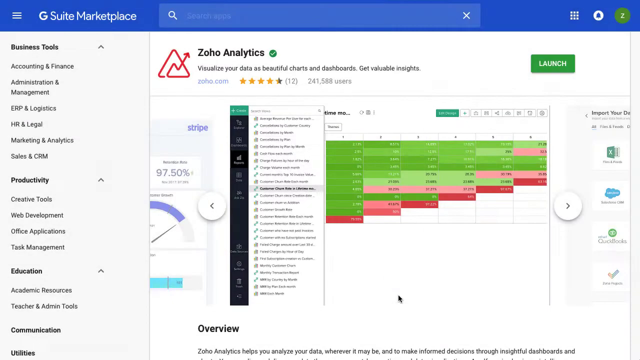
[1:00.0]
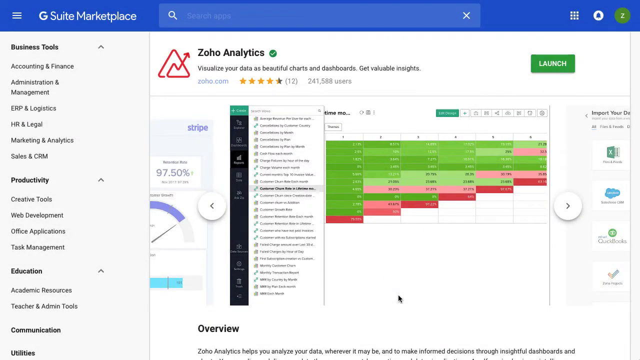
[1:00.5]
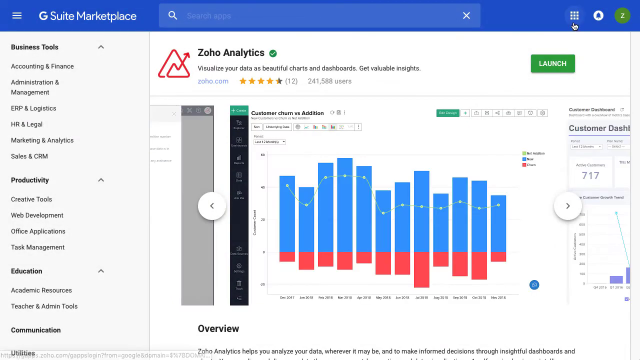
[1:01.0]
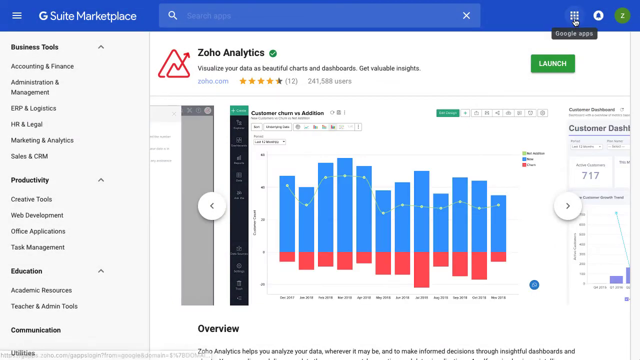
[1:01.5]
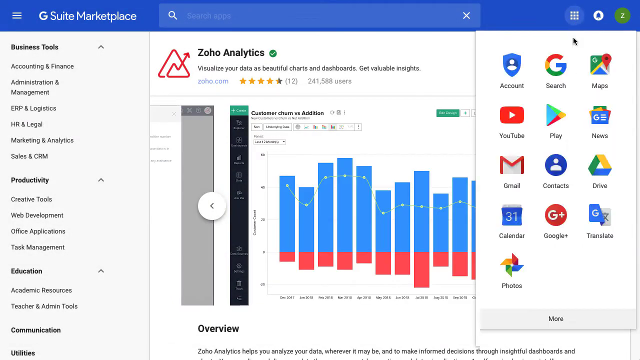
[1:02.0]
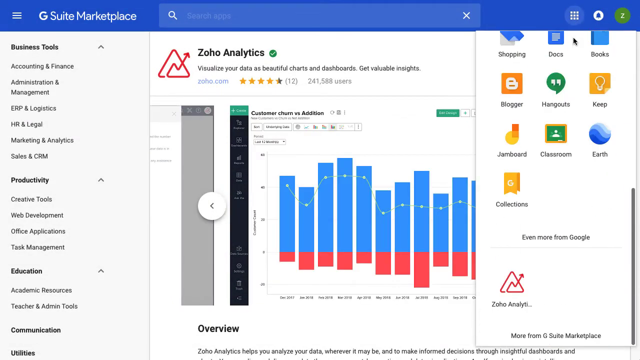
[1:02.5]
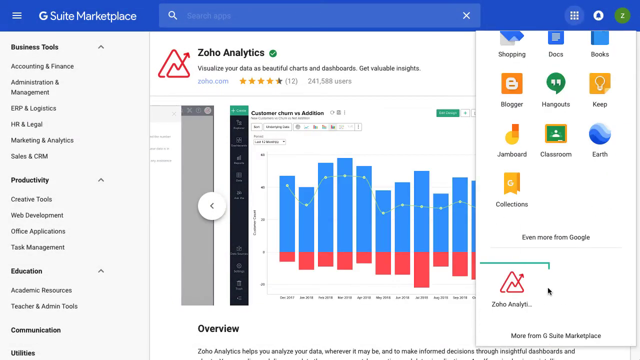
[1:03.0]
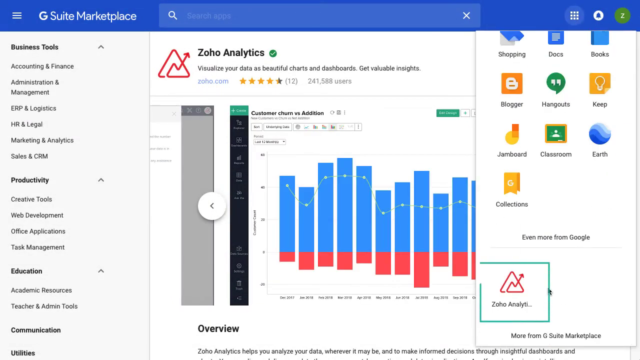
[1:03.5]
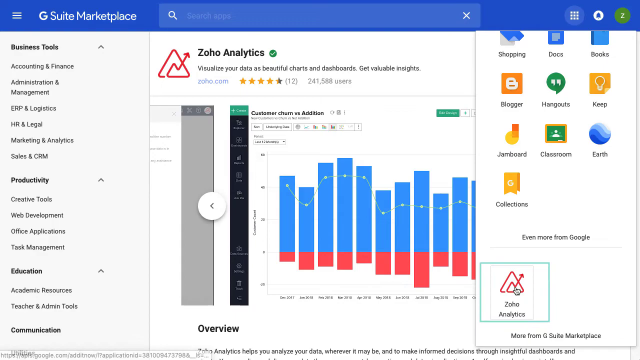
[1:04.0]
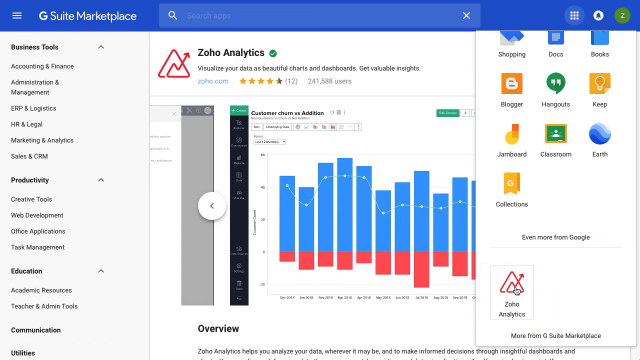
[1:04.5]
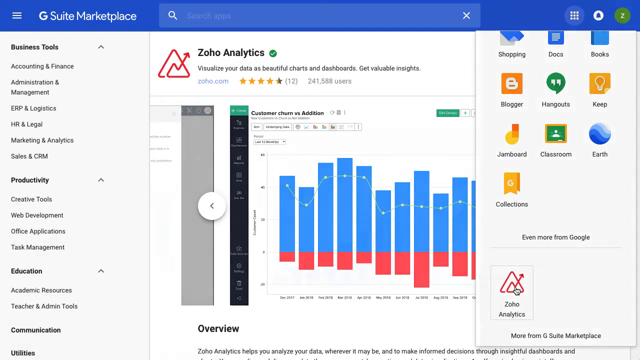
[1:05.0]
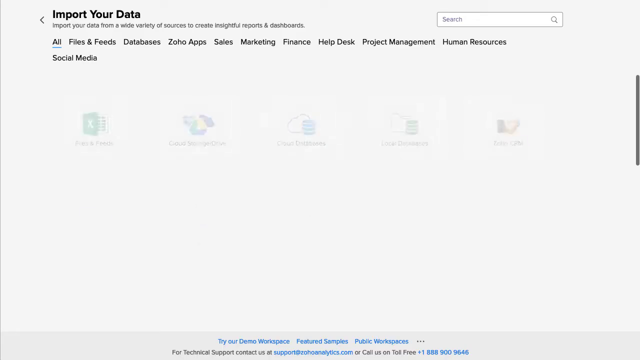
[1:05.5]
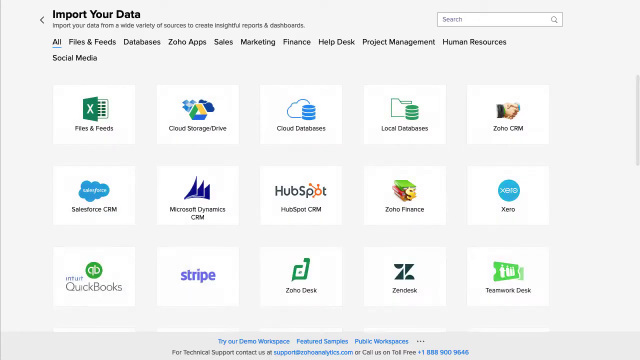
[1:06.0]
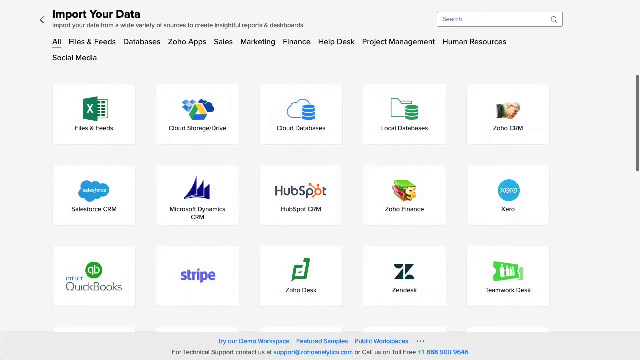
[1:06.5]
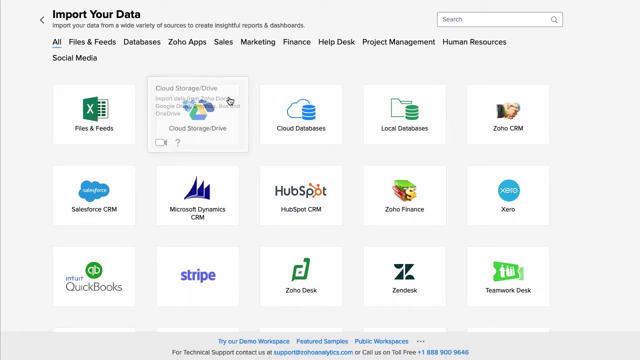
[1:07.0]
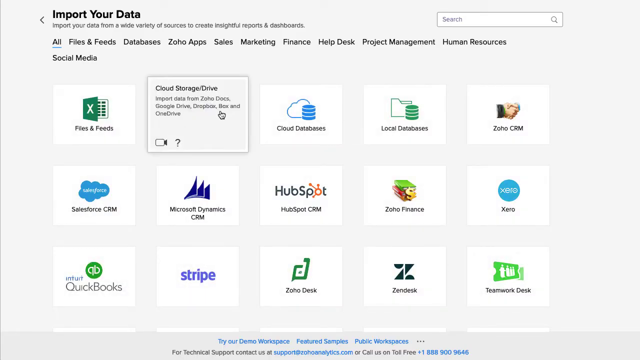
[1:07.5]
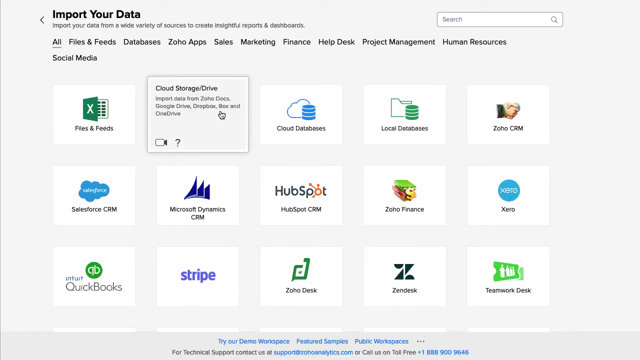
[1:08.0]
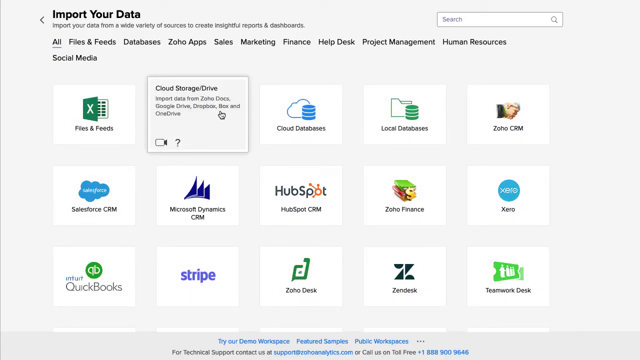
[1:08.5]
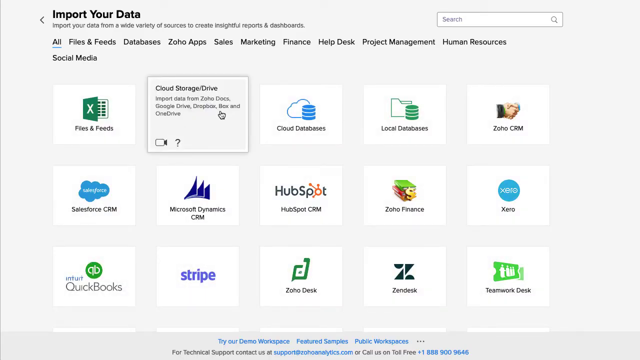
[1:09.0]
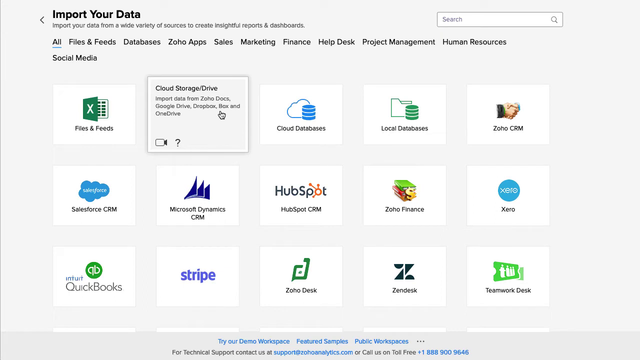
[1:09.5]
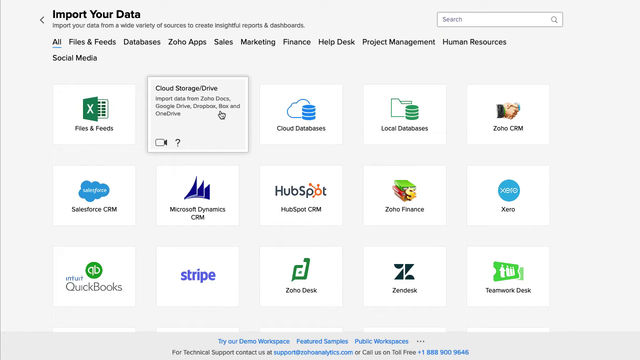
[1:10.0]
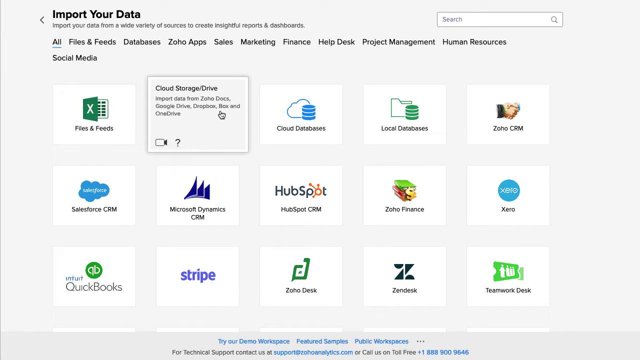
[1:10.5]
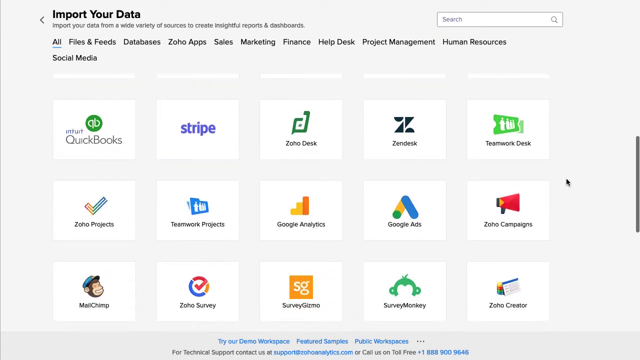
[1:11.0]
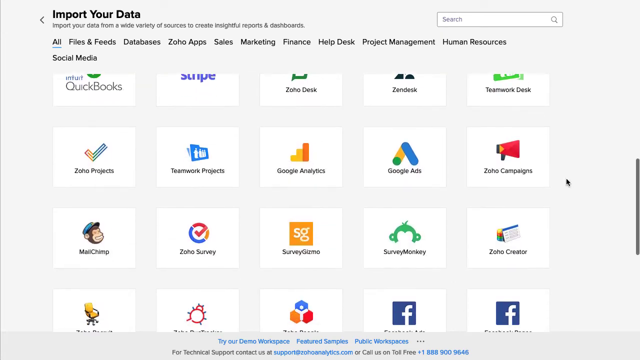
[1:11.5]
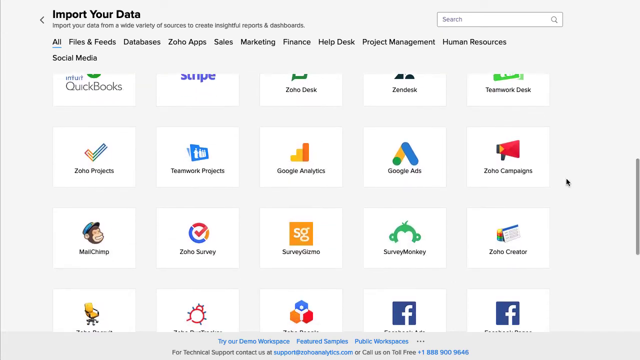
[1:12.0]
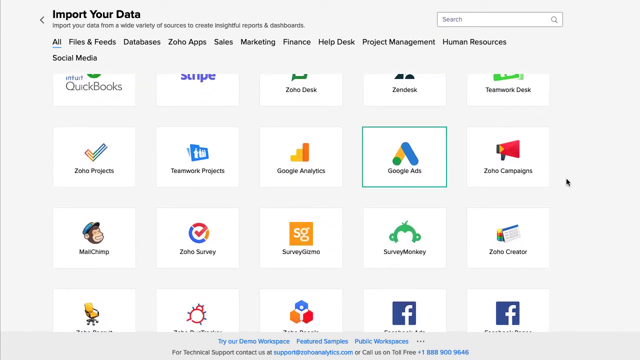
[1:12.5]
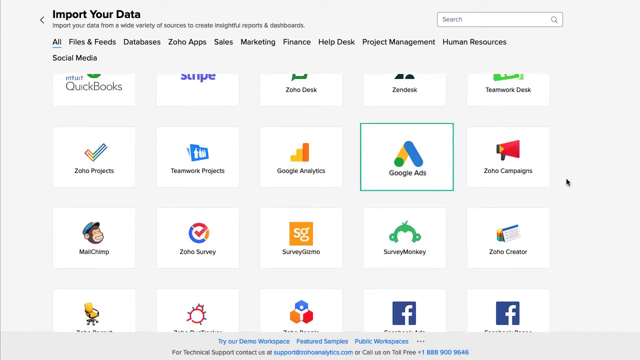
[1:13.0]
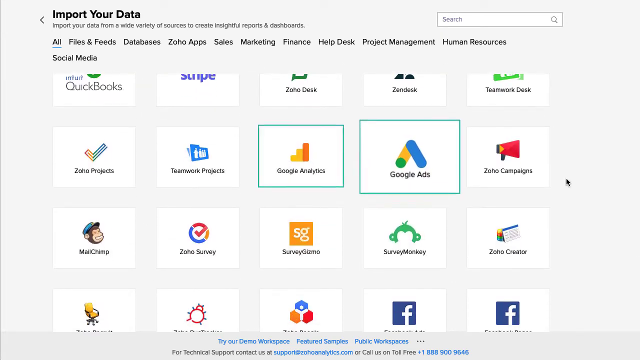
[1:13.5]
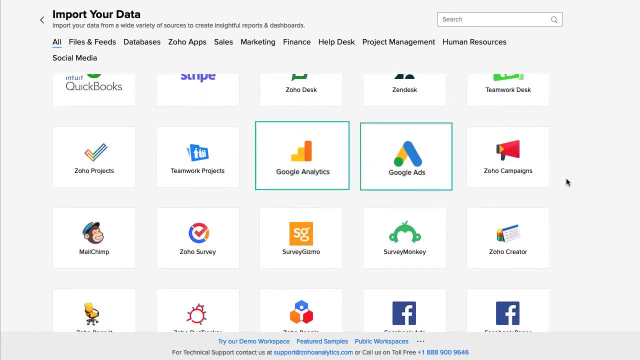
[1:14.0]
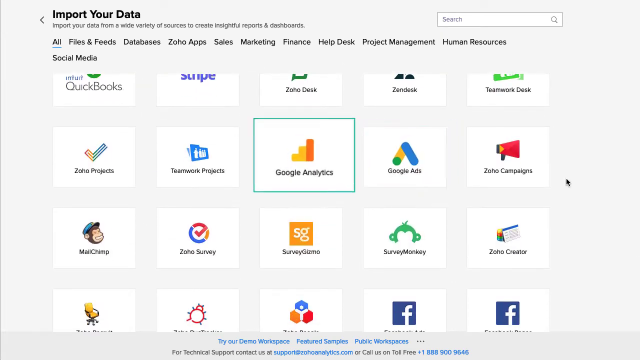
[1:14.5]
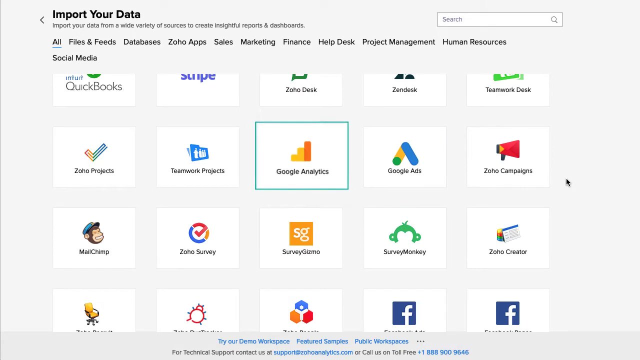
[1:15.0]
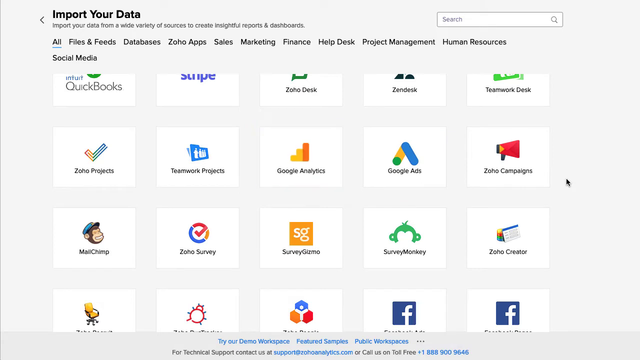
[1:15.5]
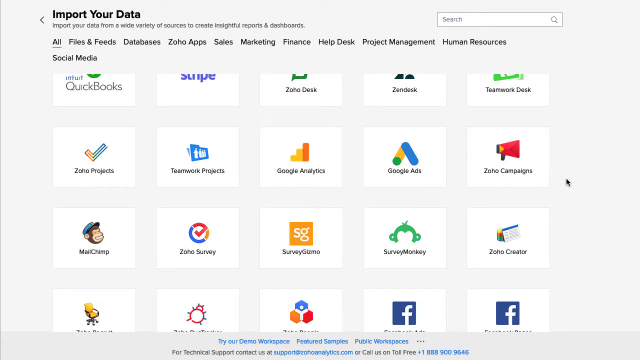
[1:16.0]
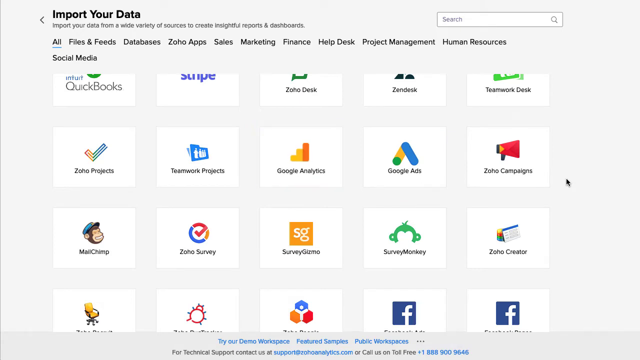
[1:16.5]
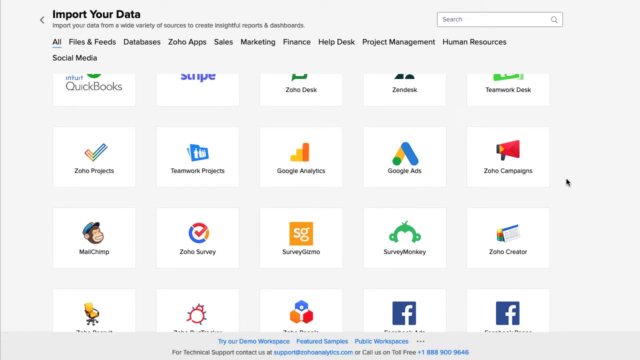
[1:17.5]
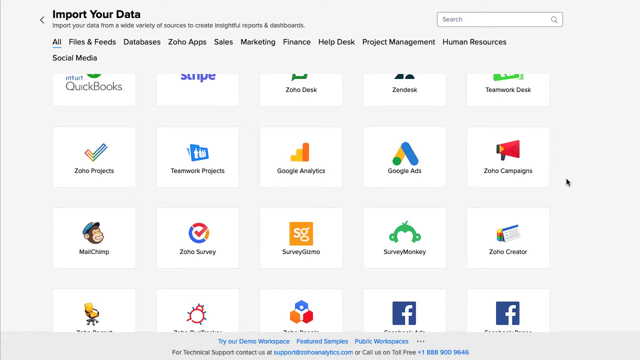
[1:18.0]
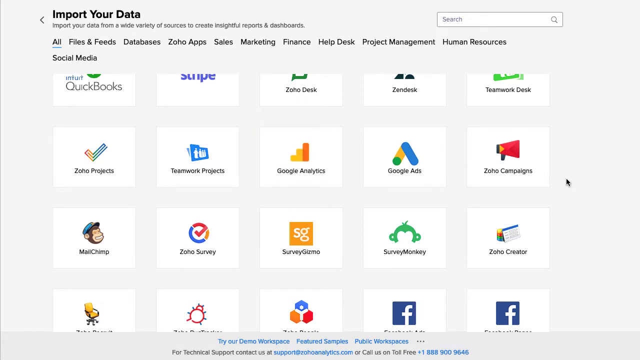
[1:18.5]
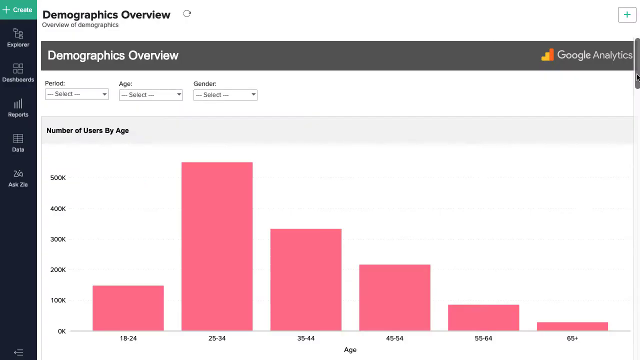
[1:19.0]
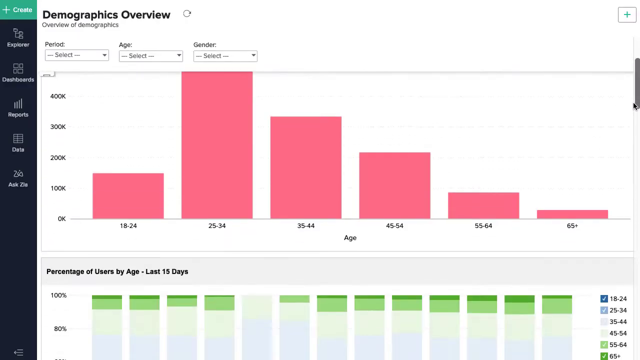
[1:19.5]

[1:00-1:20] The G Suite Marketplace website shows the page for the Zoho Analytics app. The cursor clicks a tab on the right, opening a grid of icons for Google products such as shopping, books, blogger, hangouts, Earth, Classroom, Jamboard and Collections, with "even more from Google" at the bottom in black text. The Zoho Analytics icon appears among the apps; a green square appears around it and the cursor clicks it. A screen follows with "import your data" at the top in black text and a list of apps such as HubSpot, CRM, Stripe, Zendesk and Cloud Databases. The cursor hovers over one labeled "Cloud Storage / Drive", then the person scrolls down and hovers again; the Google Ads and Google Analytics boxes are illuminated and grow larger for a second. A different screen then shows many graphs in different colors, and the cursor scrolls down; many of them are large bar graphs. At the top of the screen is "demographics, overview" in black text, and on the left are items such as Explorer, dashboards and reports, hard to see because the text is small.